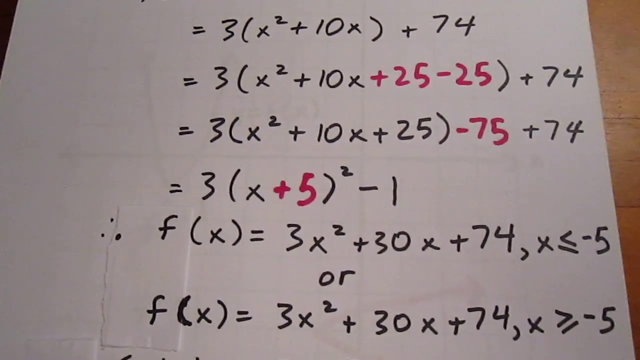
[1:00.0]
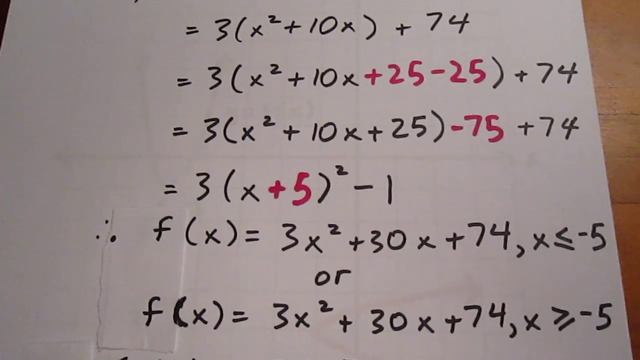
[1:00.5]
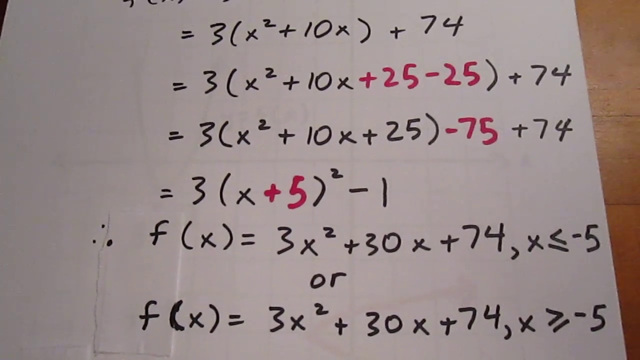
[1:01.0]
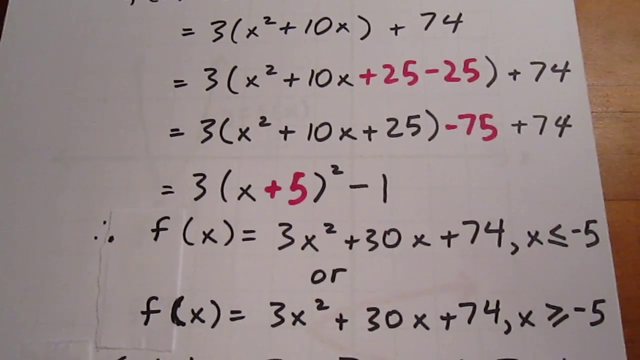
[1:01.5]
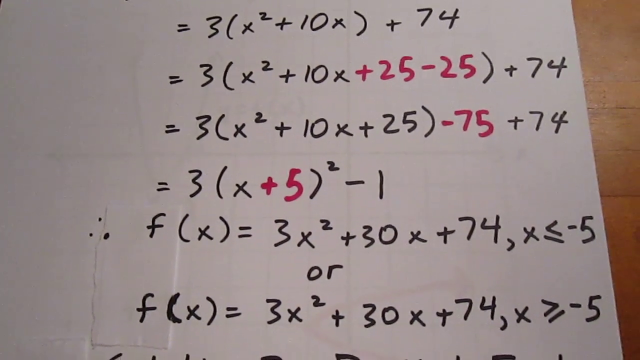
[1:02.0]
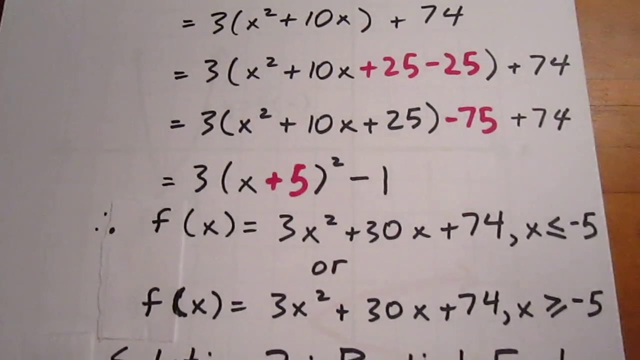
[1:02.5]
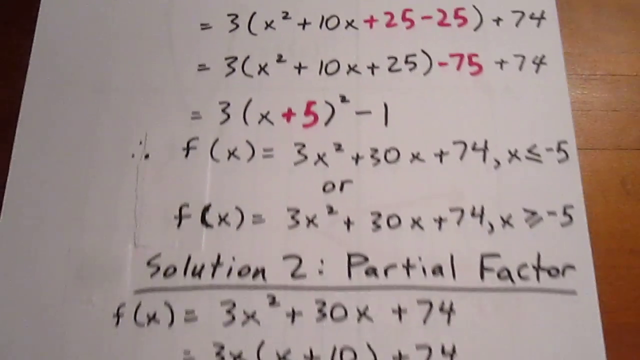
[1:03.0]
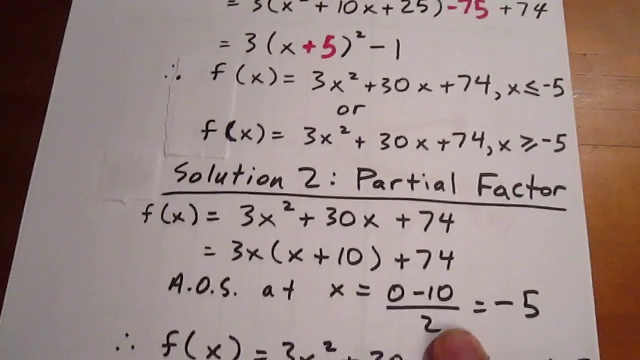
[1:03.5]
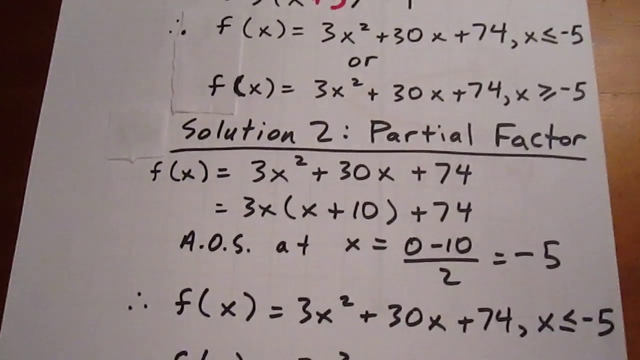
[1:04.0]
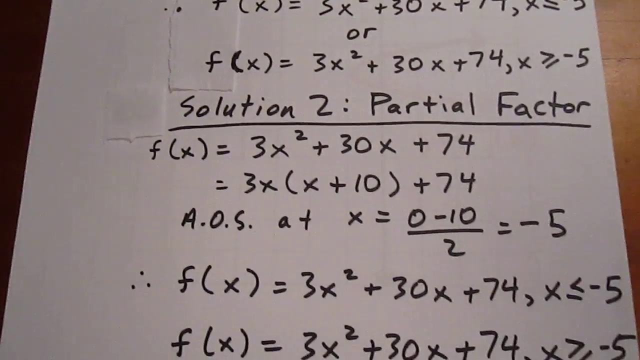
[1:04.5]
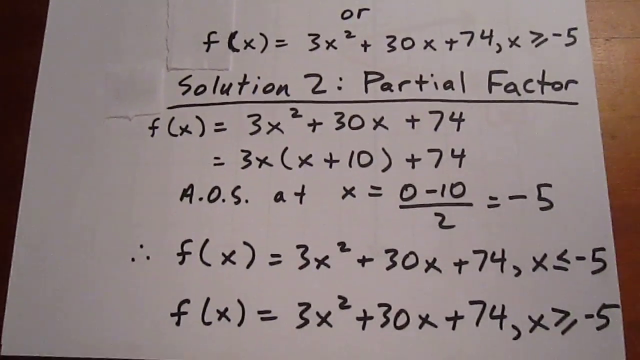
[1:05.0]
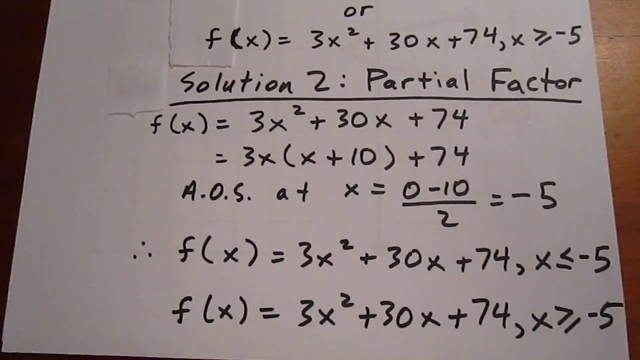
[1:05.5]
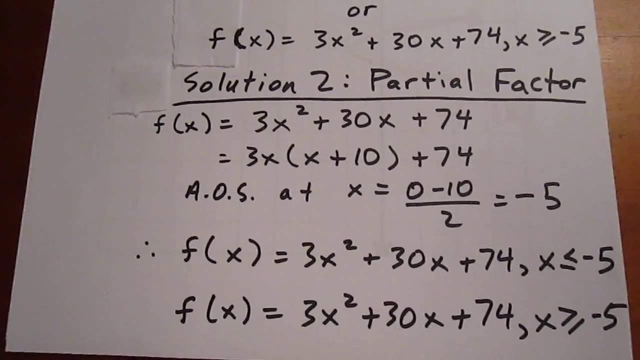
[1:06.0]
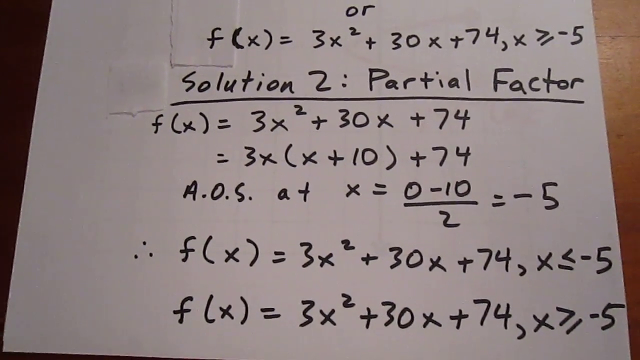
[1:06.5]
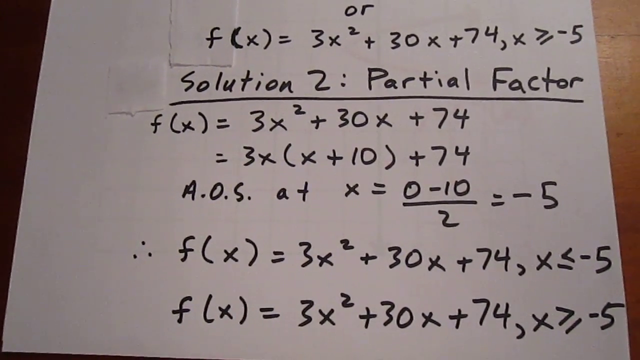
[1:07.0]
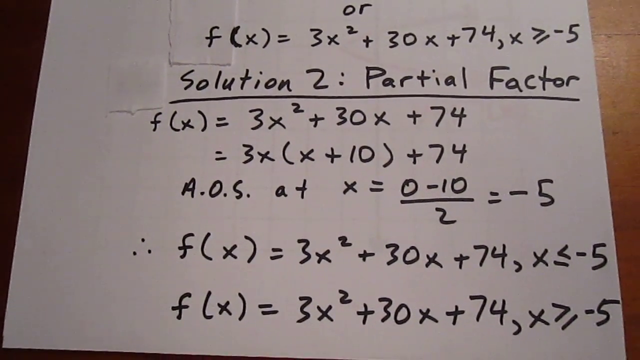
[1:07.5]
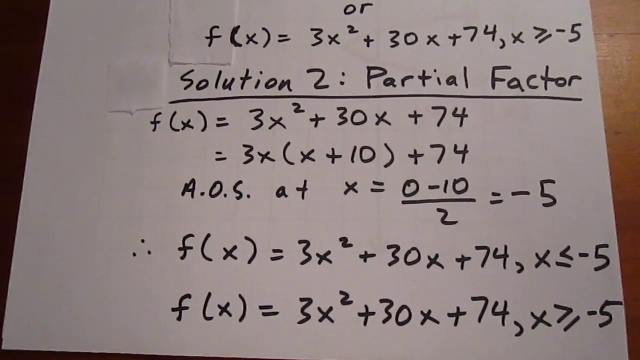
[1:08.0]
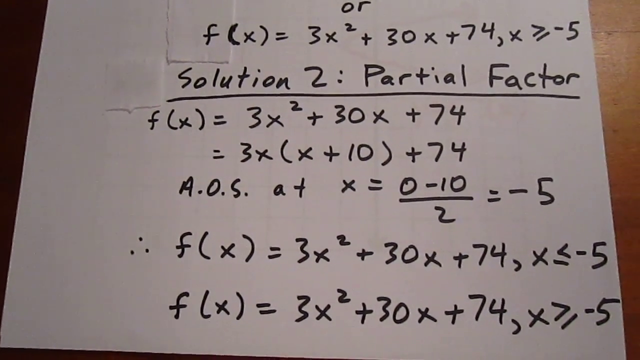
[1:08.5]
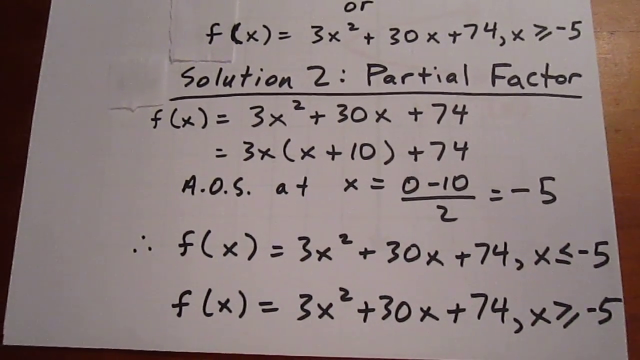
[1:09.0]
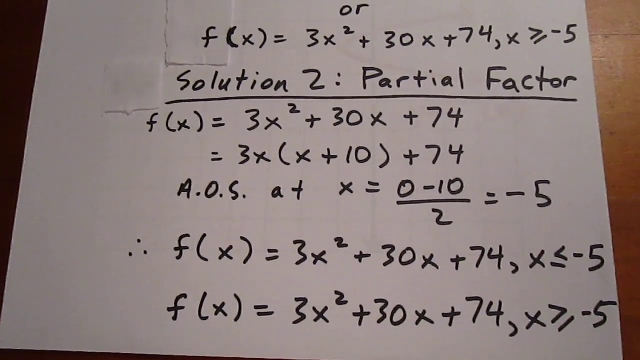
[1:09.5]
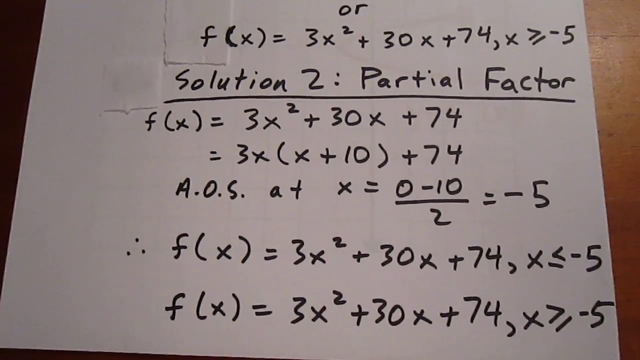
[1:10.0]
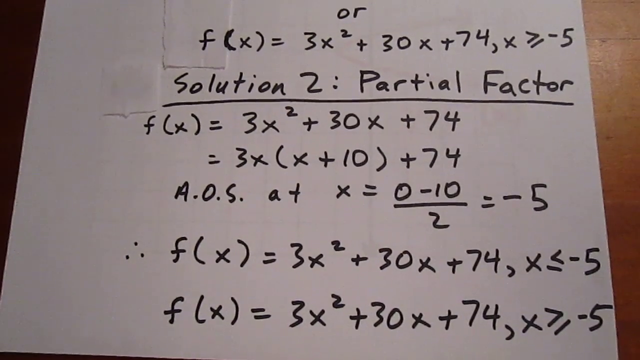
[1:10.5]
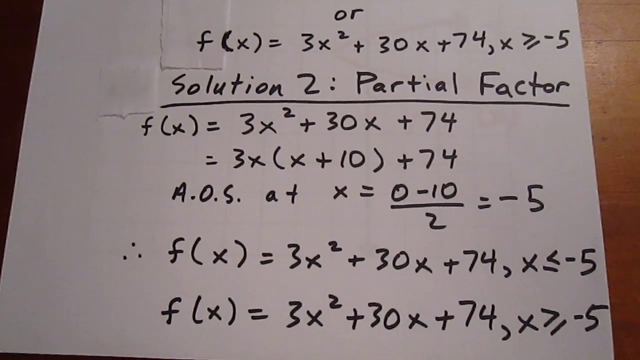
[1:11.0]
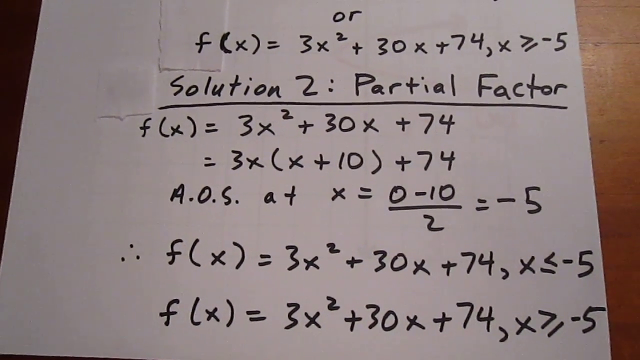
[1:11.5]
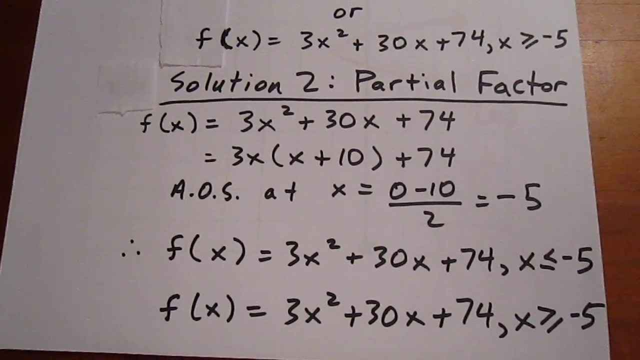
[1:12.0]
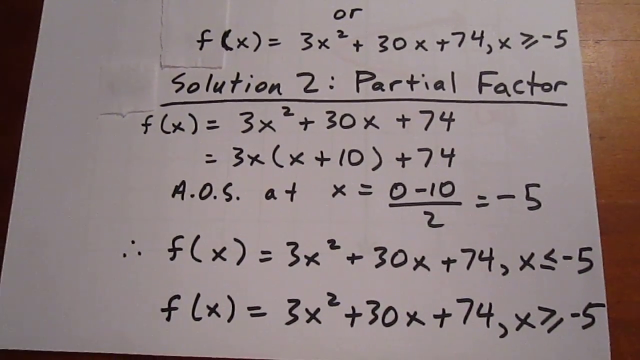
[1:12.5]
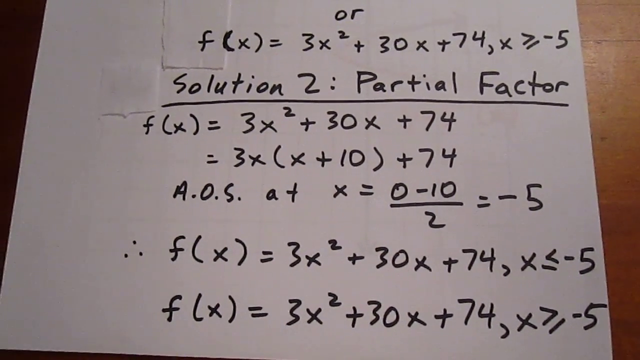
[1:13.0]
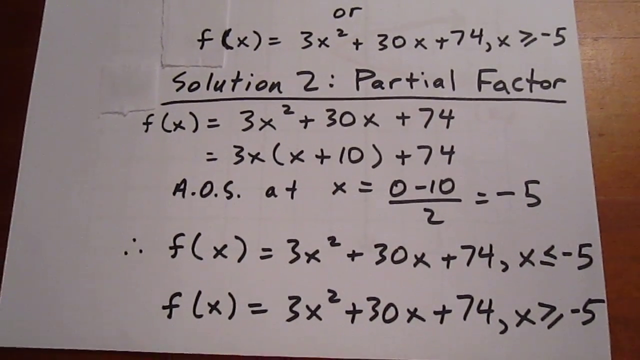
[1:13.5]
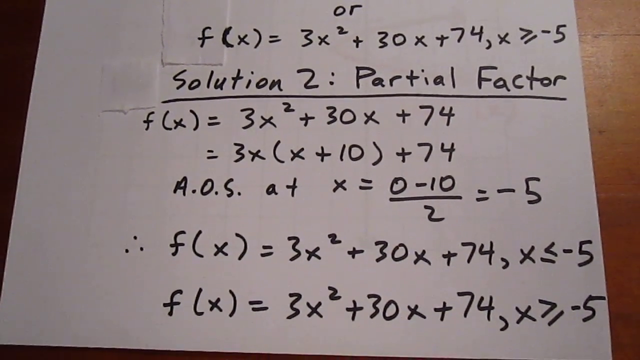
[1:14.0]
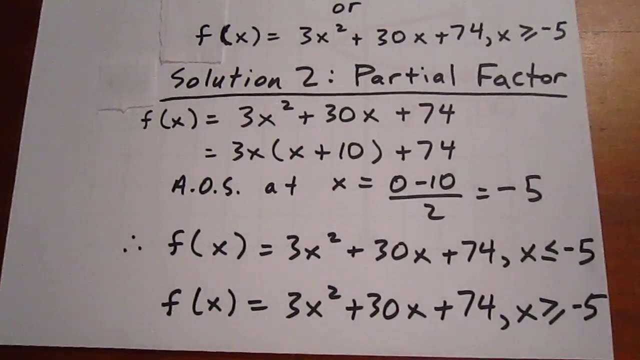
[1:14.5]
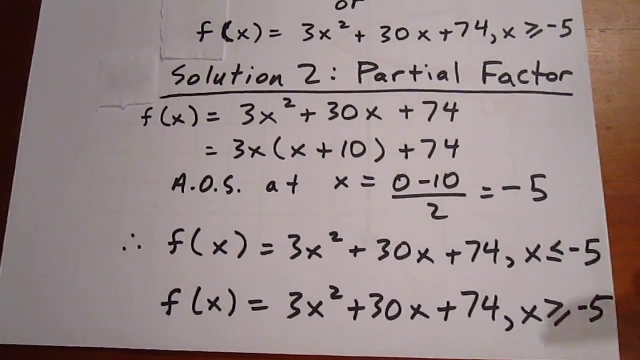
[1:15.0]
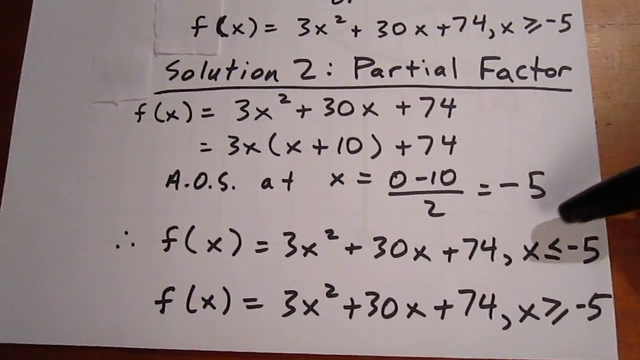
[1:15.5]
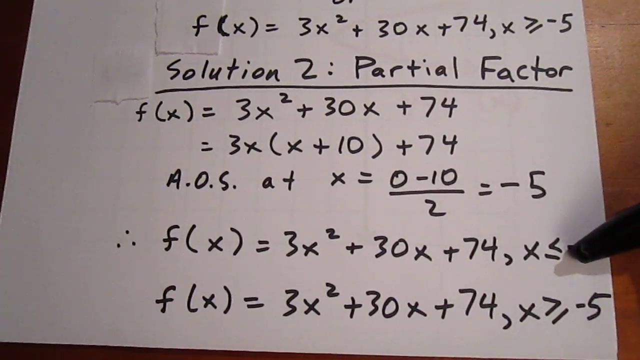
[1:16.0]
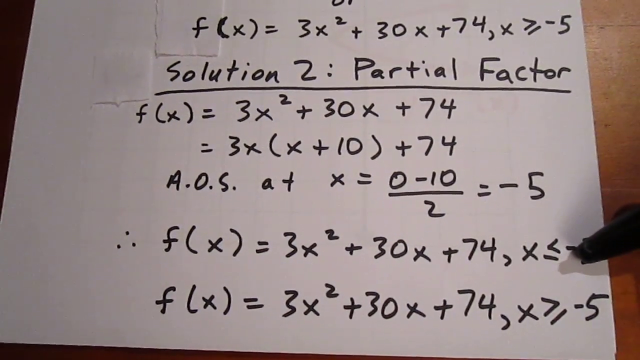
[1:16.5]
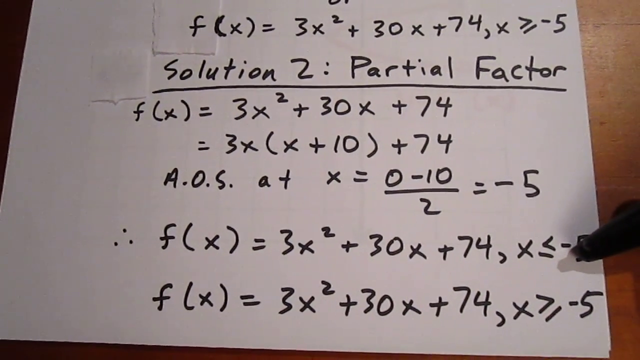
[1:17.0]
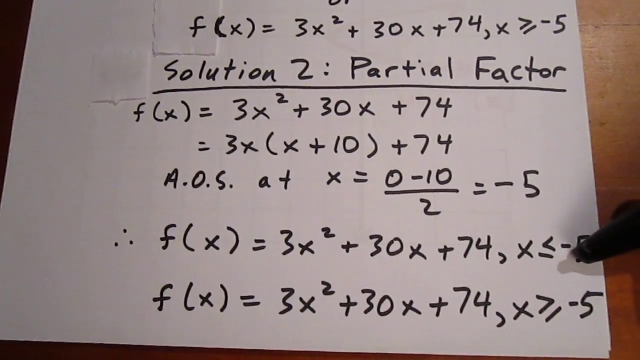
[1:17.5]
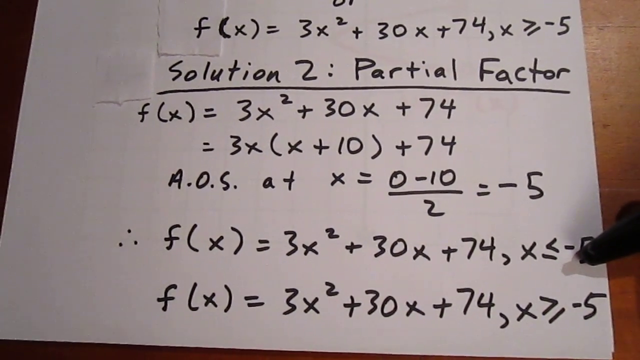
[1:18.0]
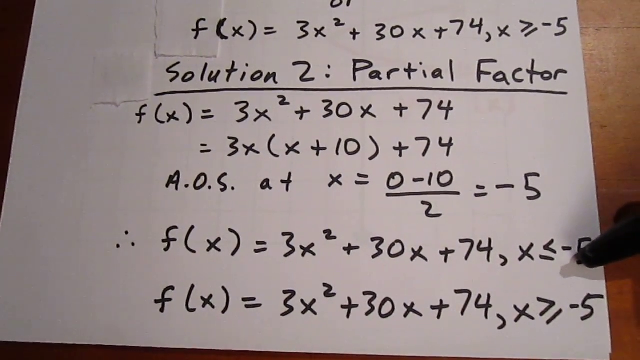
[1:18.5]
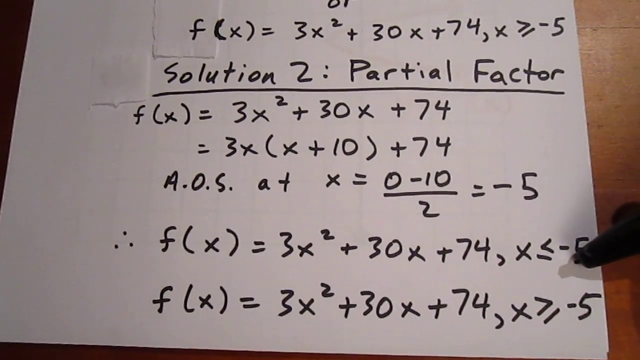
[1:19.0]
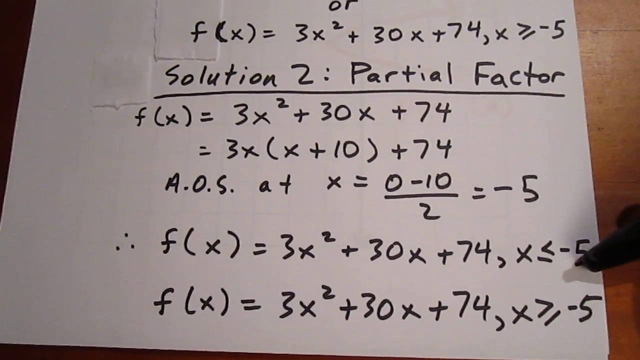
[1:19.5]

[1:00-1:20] The view zooms out further, showing further down the page, where solution two, partial factor, is written. It starts with the original equation f(x) = 3x² + 30x + 74. The next line reads f(x) = 3x(x + 10) + 74. Then come the initials A.O.S. at x equals 0 minus 10, divided by 2, equals −5. Next are three dots in a triangle shape, apparently a therefore sign, followed by f(x) = 3x² + 30x + 74, when x ≤ −5, or f(x) = 3x² + 30x + 74, when x ≥ −5. The felt pen points out the first line, to the right of the therefore sign.